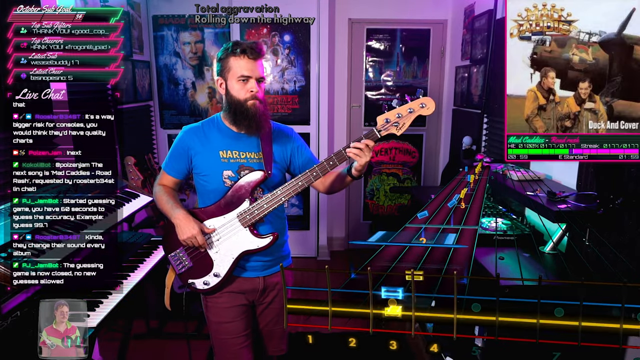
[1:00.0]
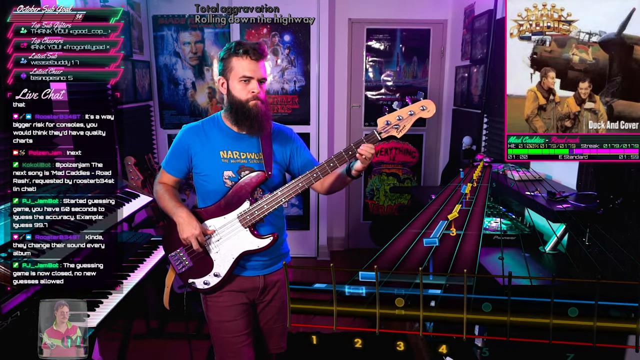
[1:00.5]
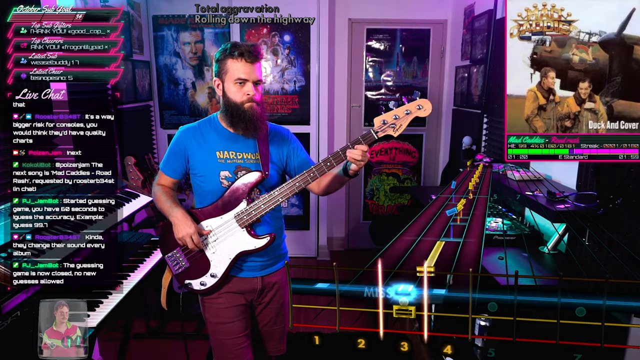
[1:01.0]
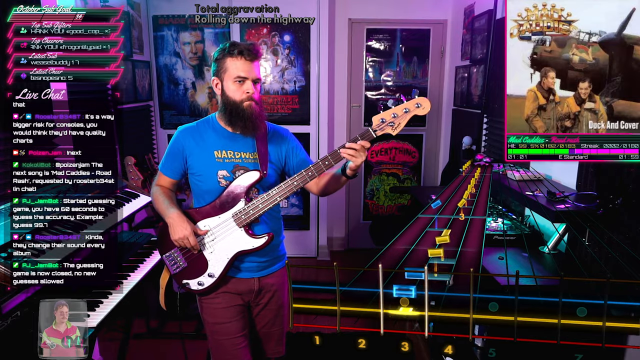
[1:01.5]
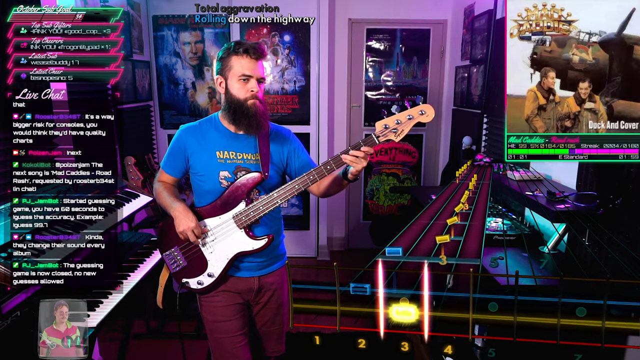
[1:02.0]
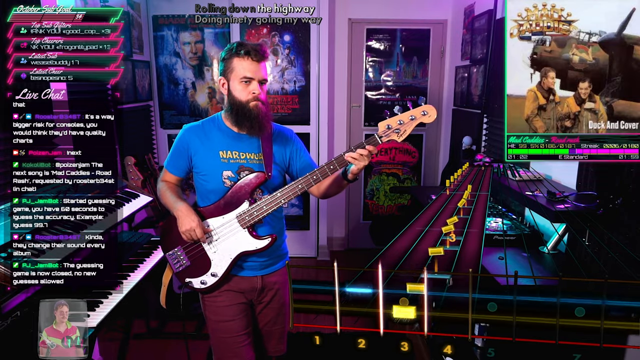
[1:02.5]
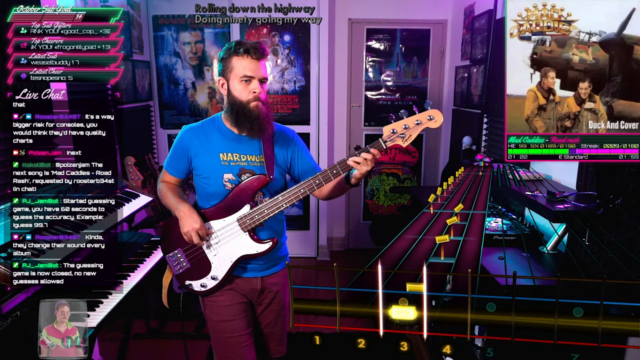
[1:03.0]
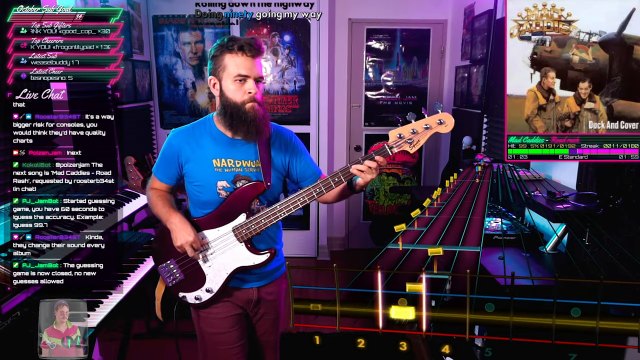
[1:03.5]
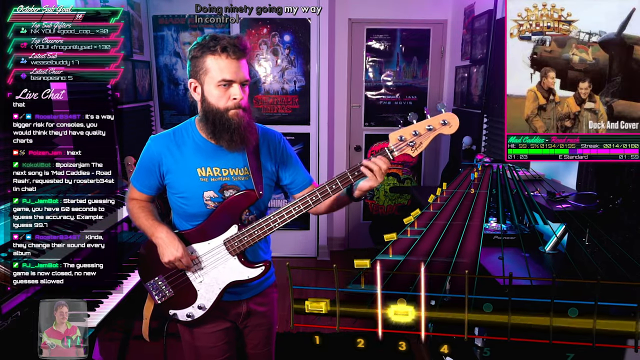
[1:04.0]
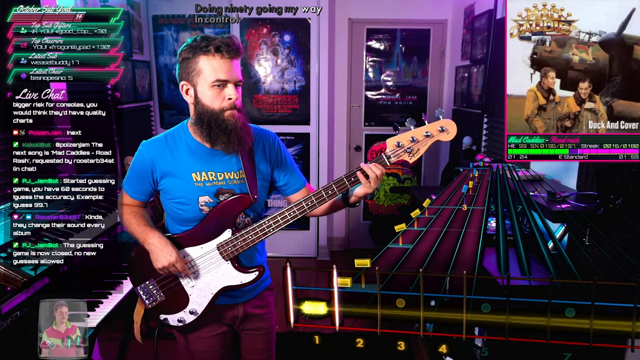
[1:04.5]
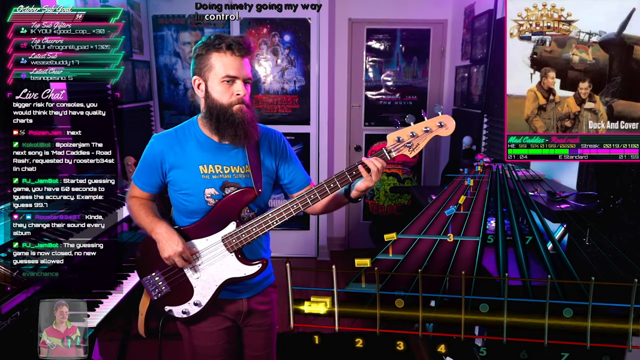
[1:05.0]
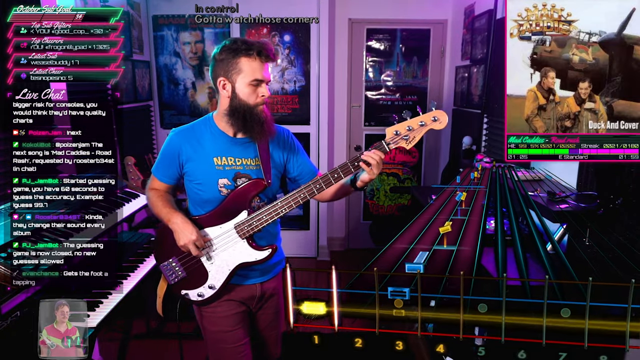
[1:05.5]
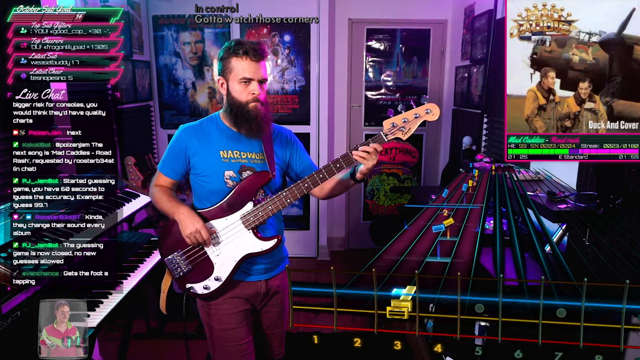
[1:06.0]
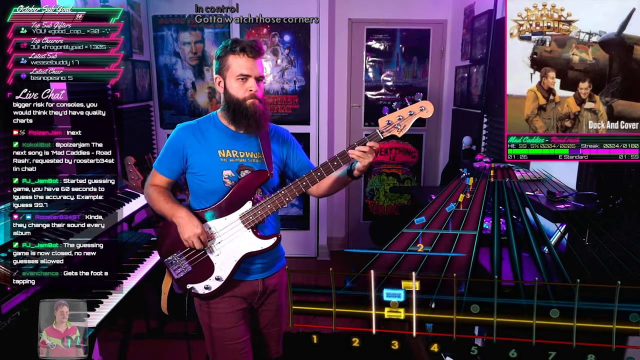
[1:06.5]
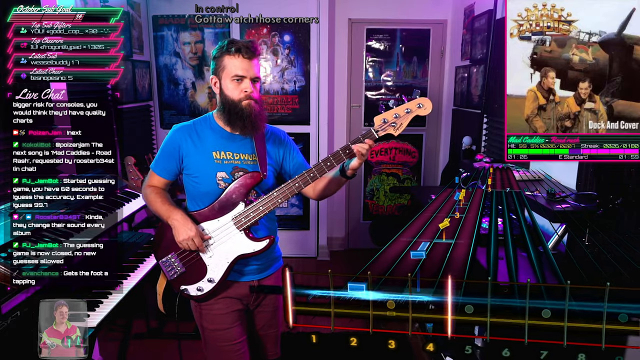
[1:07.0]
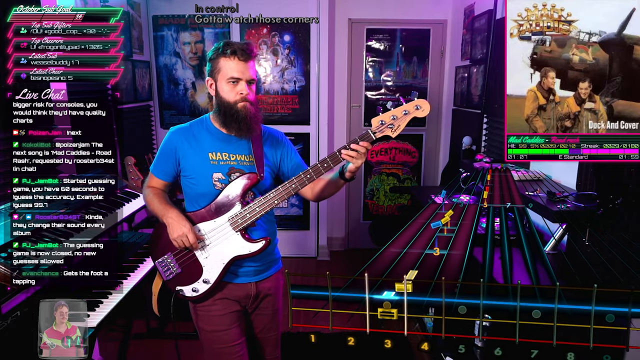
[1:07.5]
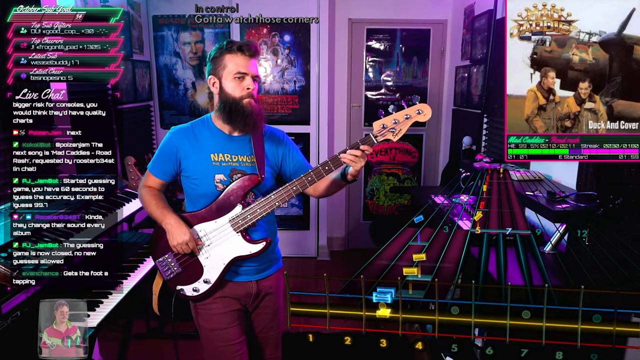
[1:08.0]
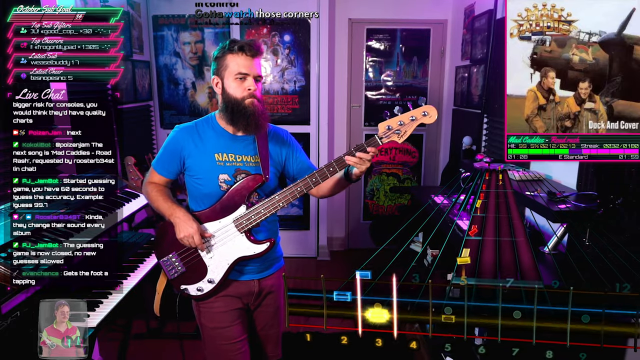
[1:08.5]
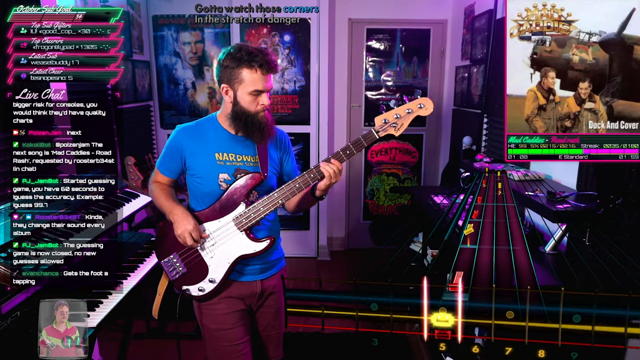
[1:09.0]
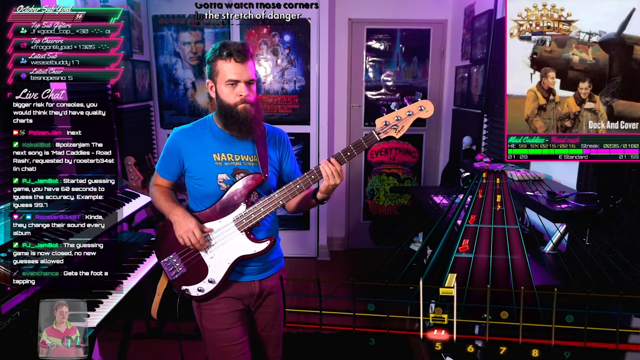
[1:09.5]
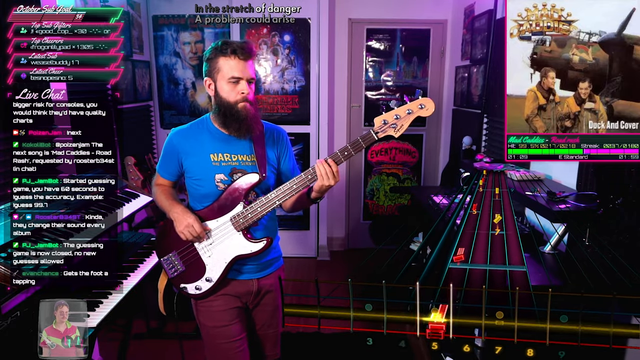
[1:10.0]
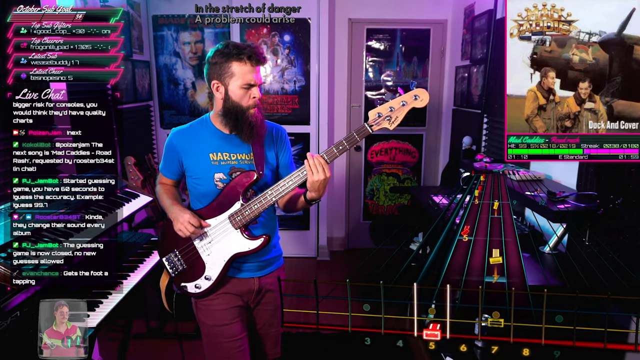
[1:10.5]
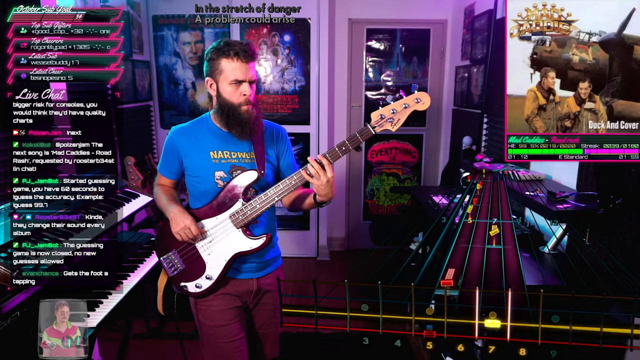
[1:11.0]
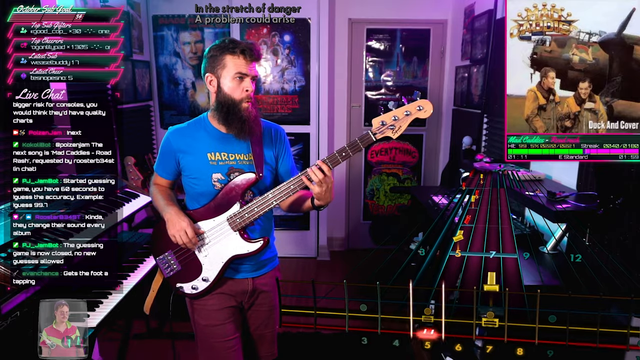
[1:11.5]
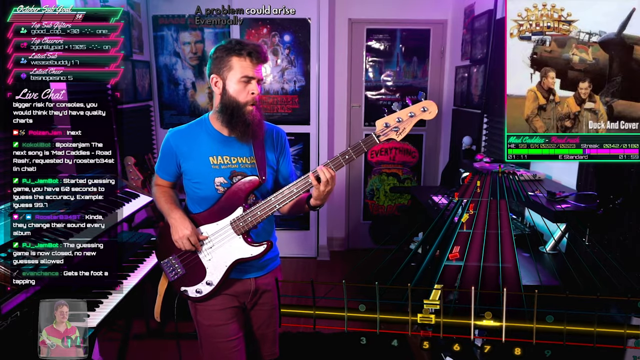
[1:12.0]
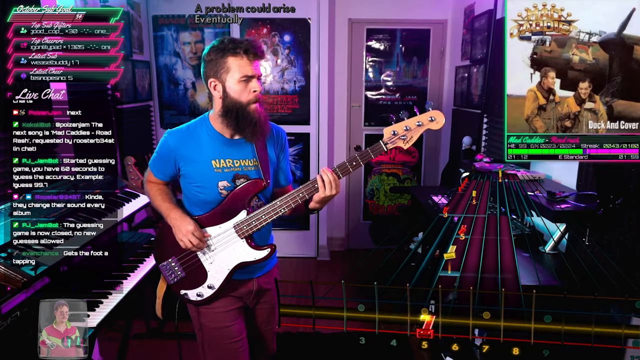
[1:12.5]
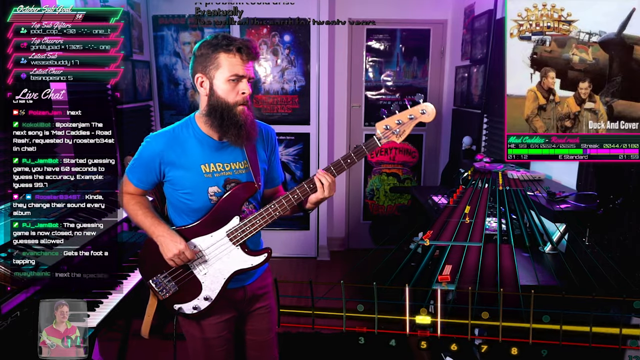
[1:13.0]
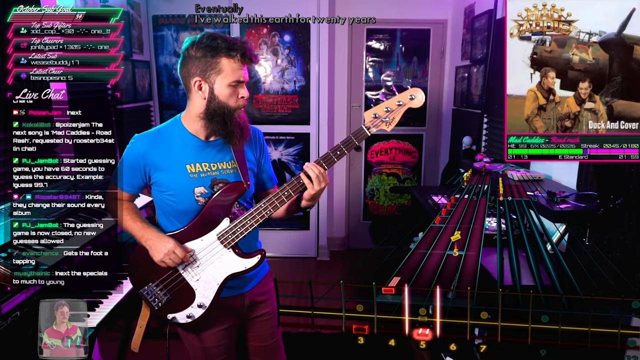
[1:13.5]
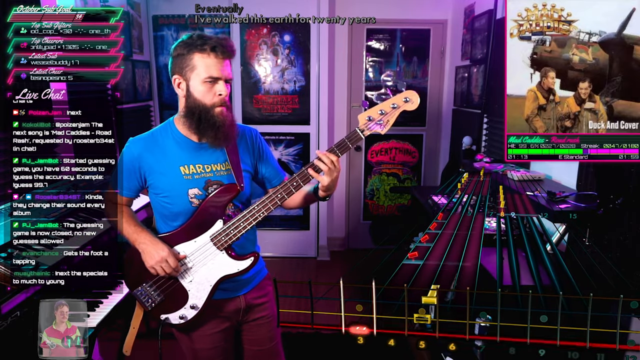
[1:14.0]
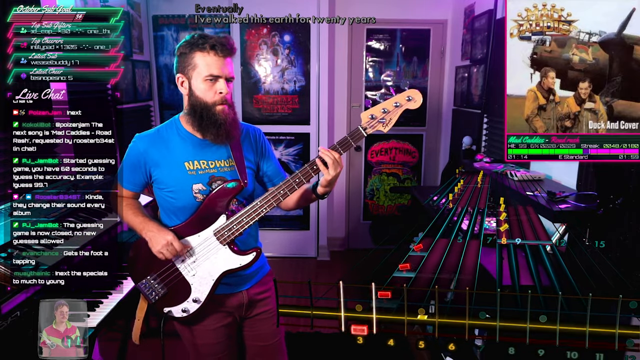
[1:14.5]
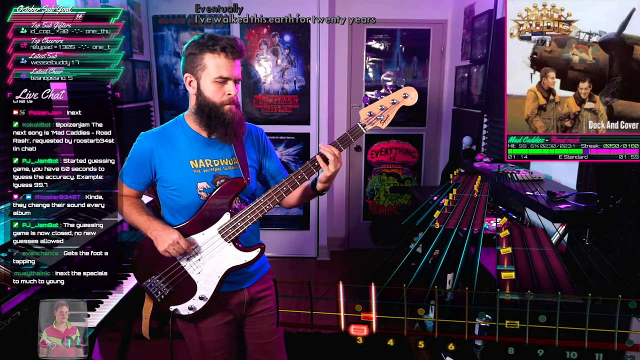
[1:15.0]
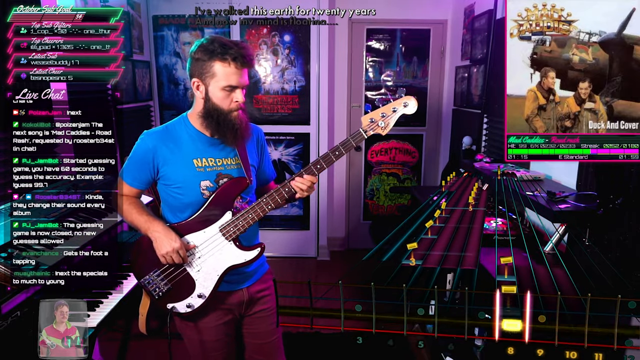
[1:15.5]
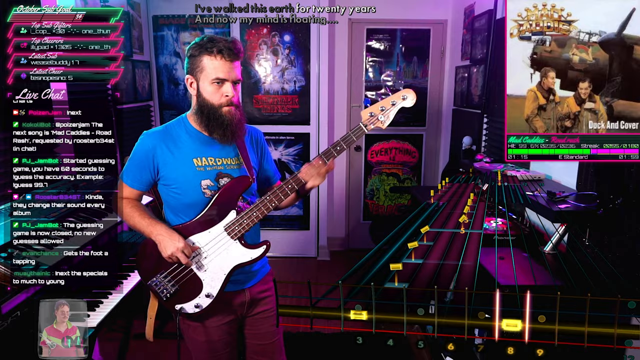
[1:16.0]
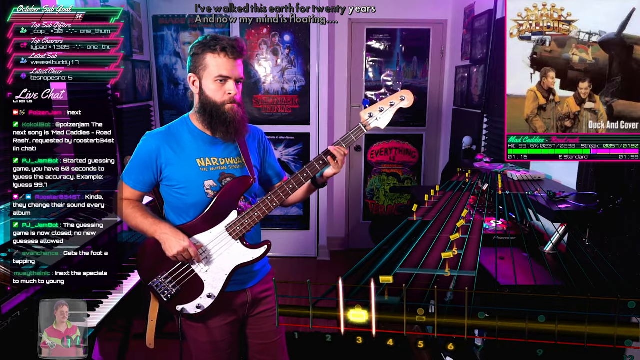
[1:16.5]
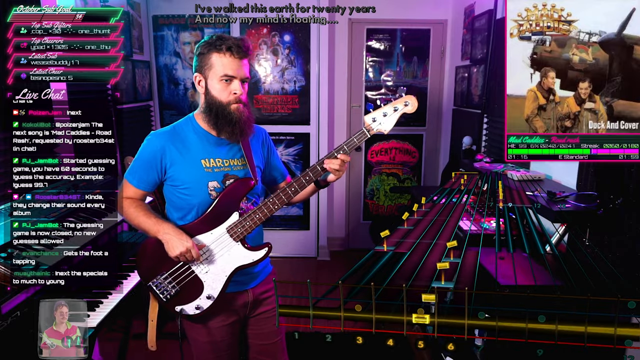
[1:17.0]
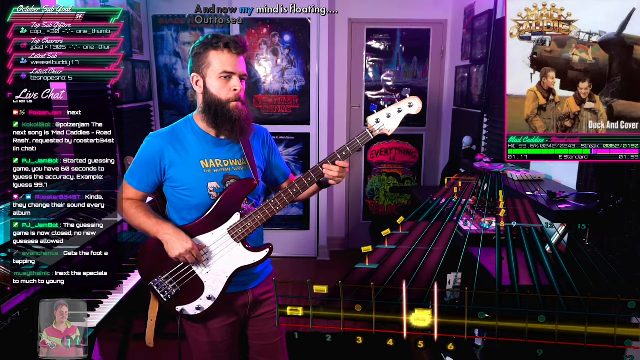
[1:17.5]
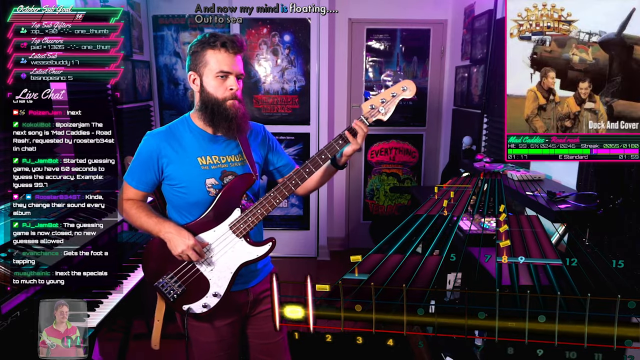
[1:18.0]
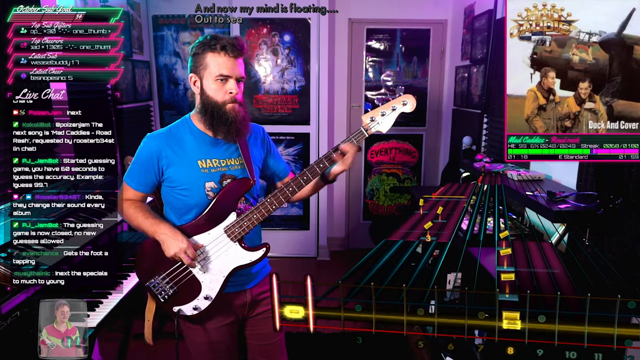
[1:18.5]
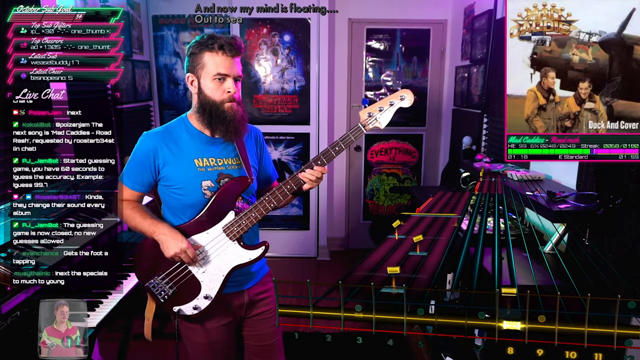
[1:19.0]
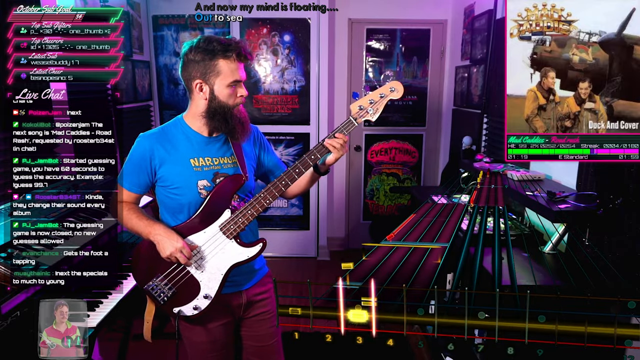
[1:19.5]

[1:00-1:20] He focuses on the guitar notes, with the lyrics still above him and the song's progression still shown just below the album cover, now toward the middle to end of the song. The live chat is still going. The background has neon lighting and a lot of movie posters in both modern and vintage styles, including one for Stranger Things and others that look like they are from the 70s or 80s. He wears a bright blue shirt with a graphic of what may be a cartoon pop culture figure, and neon-colored shorts.